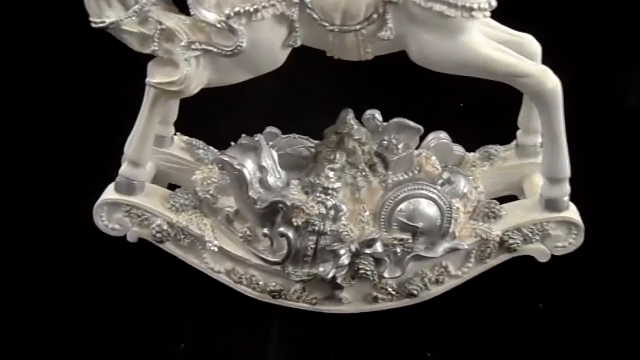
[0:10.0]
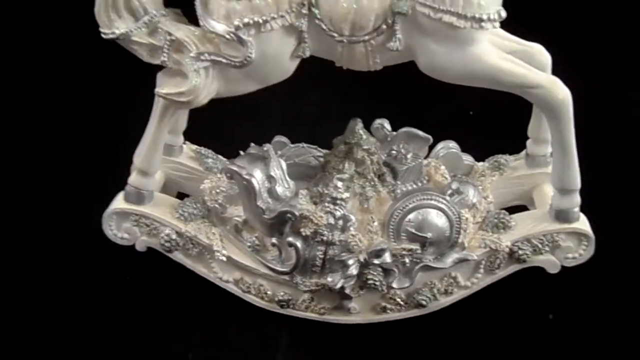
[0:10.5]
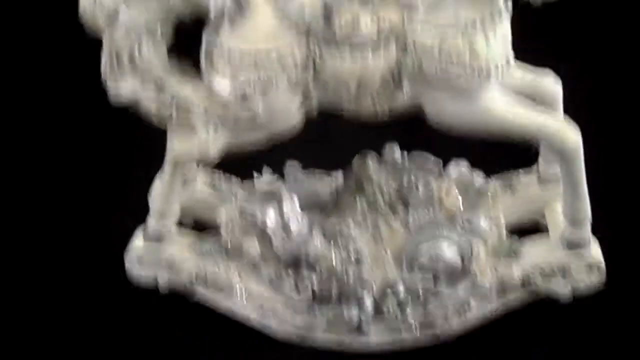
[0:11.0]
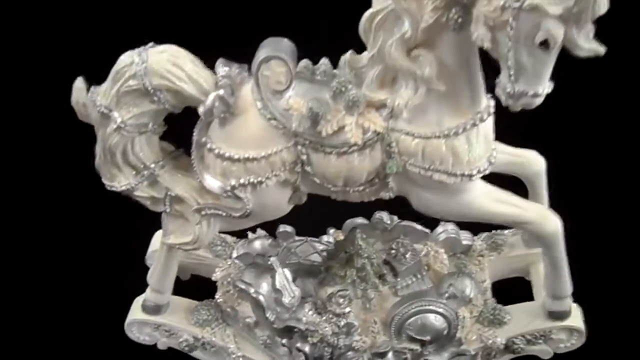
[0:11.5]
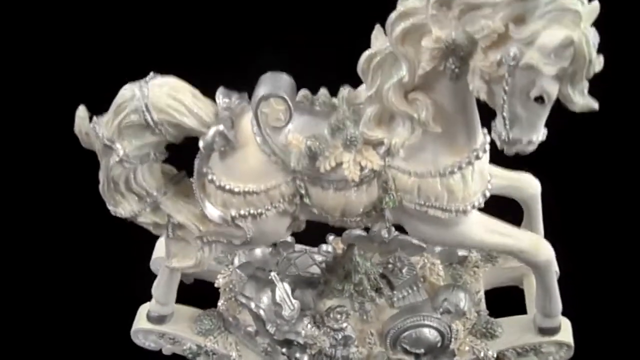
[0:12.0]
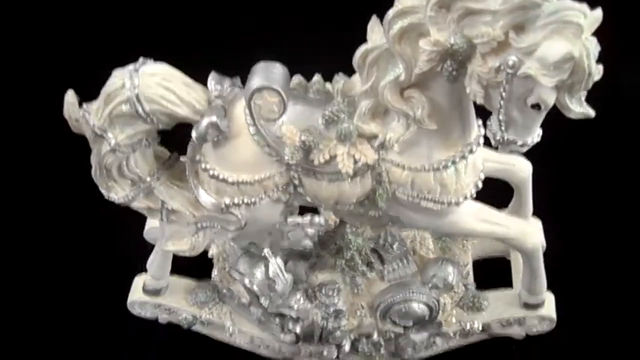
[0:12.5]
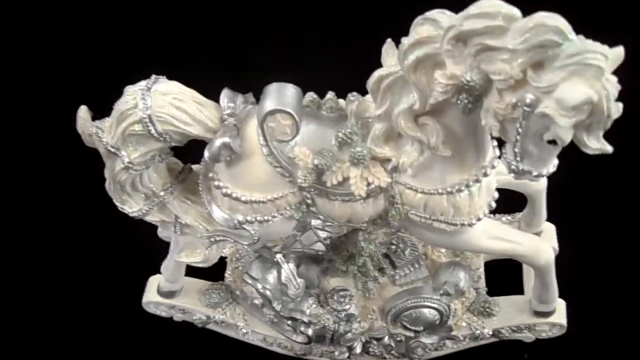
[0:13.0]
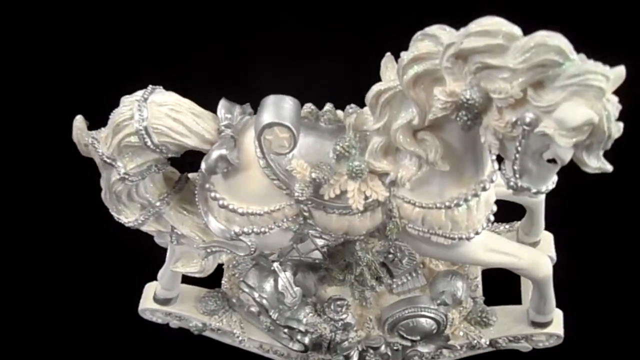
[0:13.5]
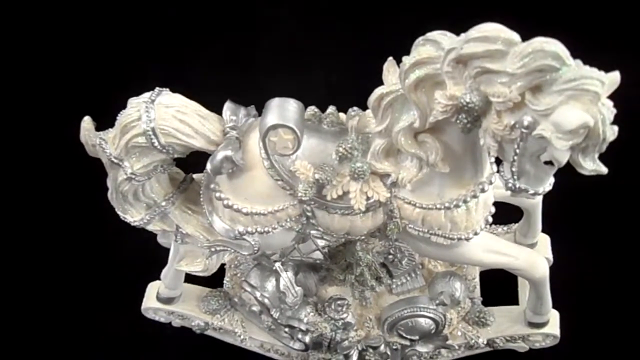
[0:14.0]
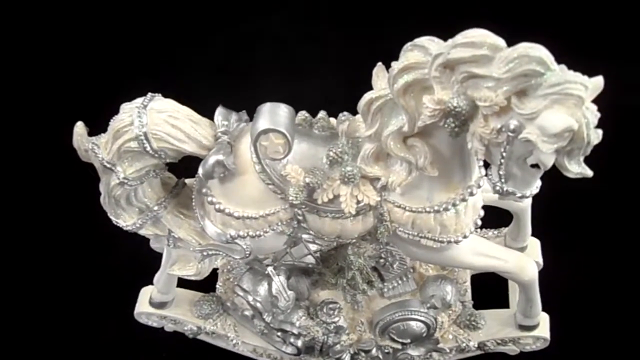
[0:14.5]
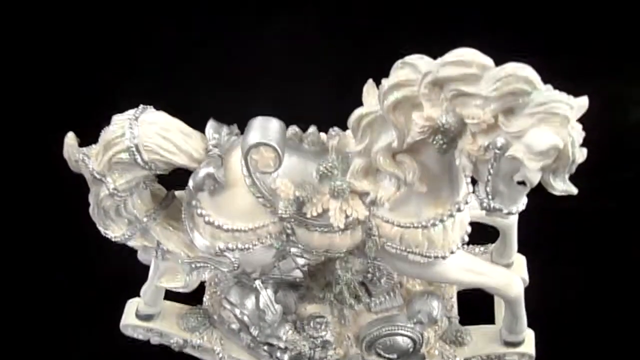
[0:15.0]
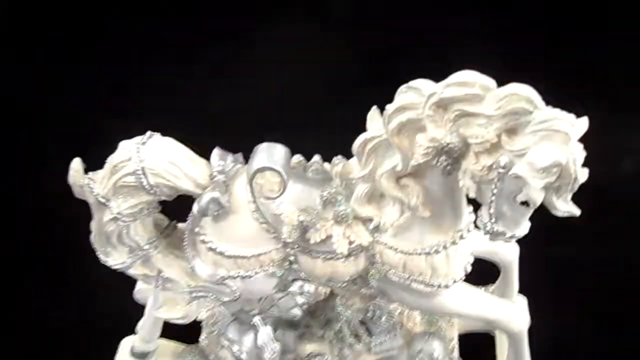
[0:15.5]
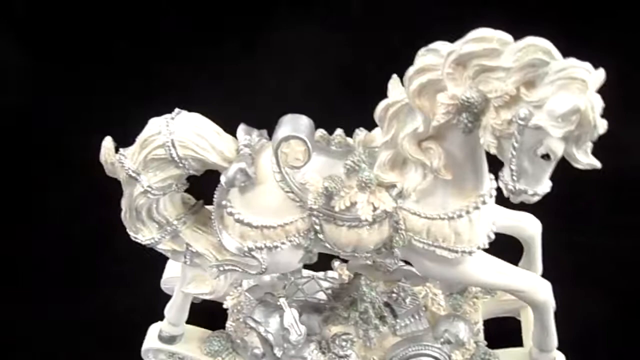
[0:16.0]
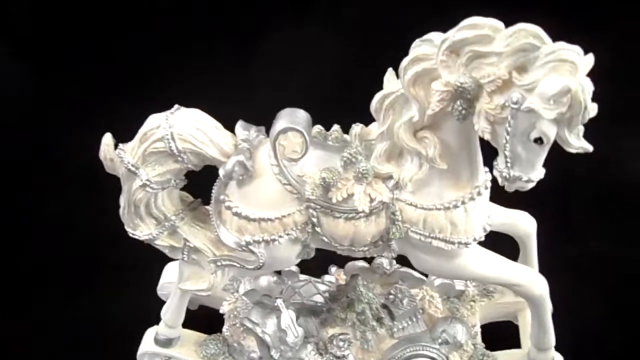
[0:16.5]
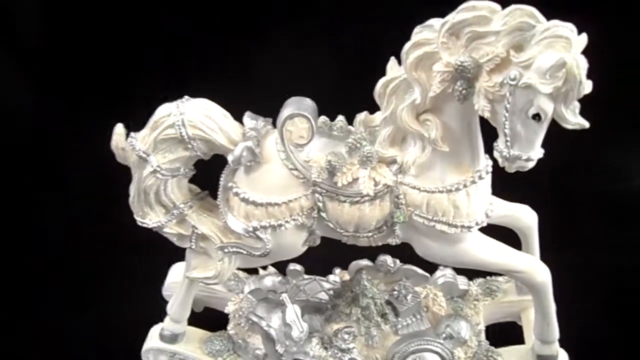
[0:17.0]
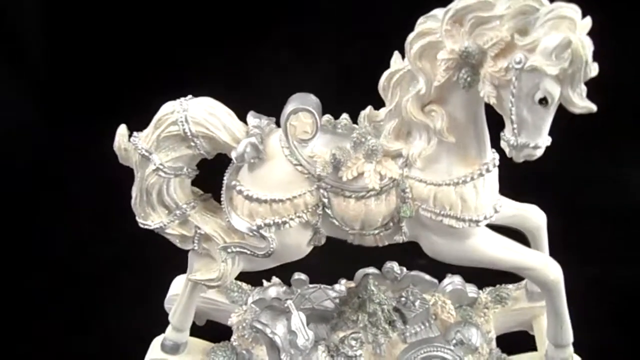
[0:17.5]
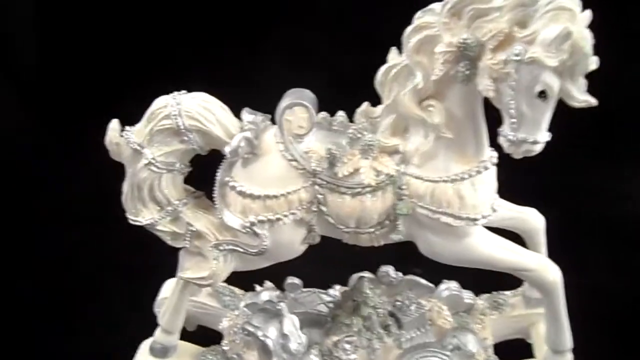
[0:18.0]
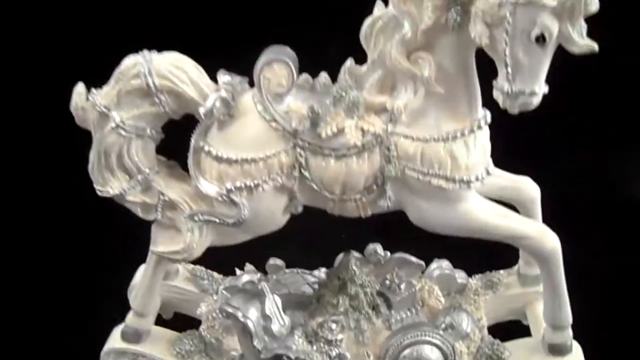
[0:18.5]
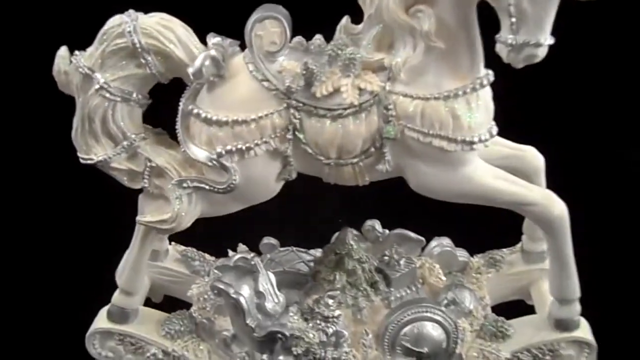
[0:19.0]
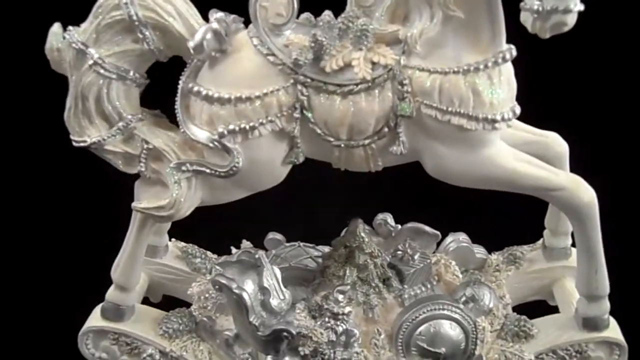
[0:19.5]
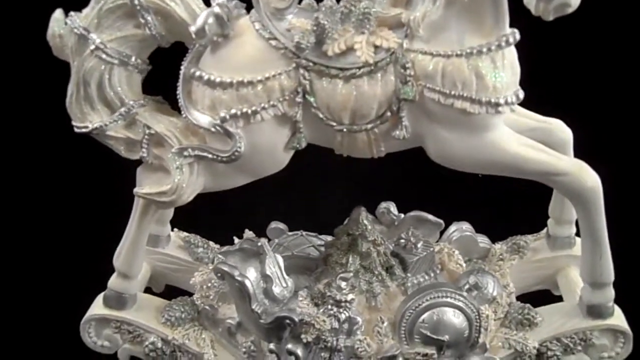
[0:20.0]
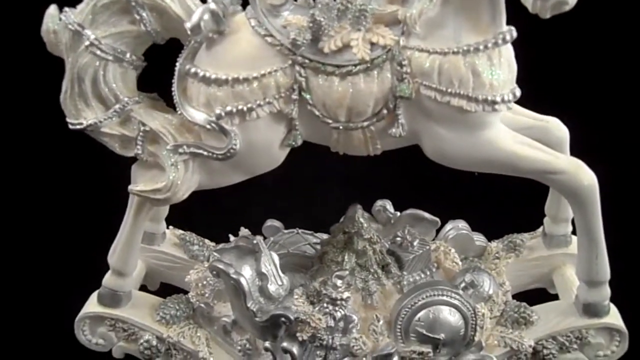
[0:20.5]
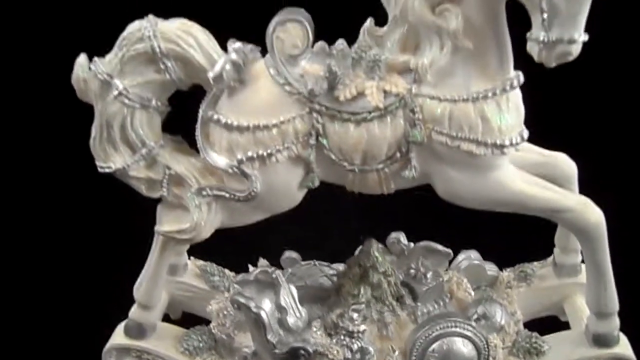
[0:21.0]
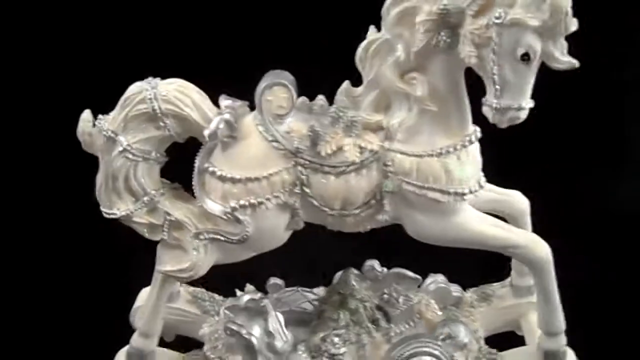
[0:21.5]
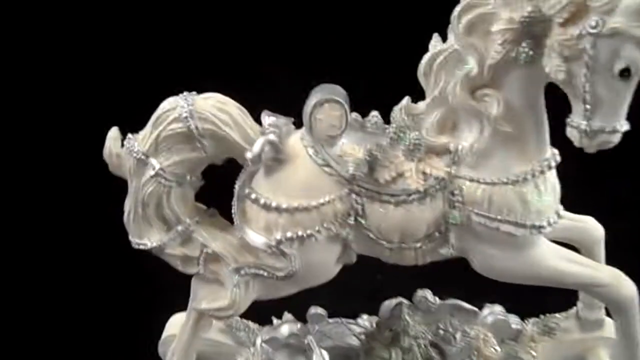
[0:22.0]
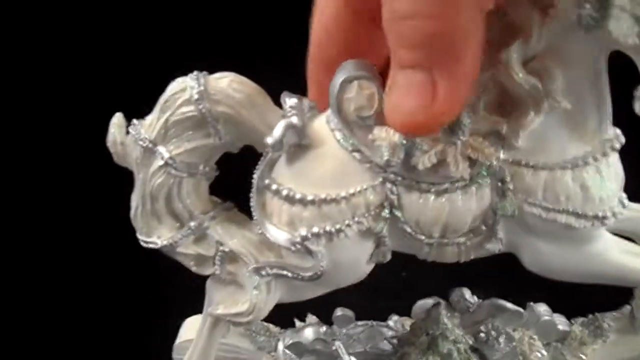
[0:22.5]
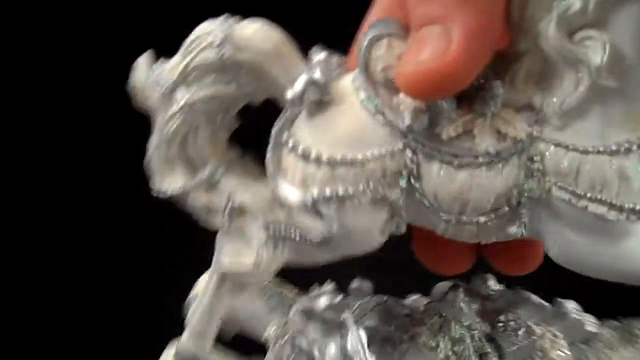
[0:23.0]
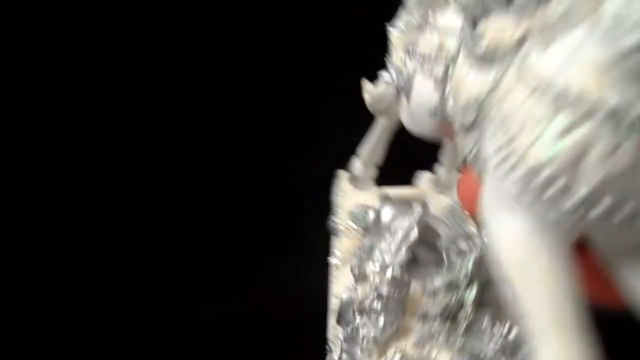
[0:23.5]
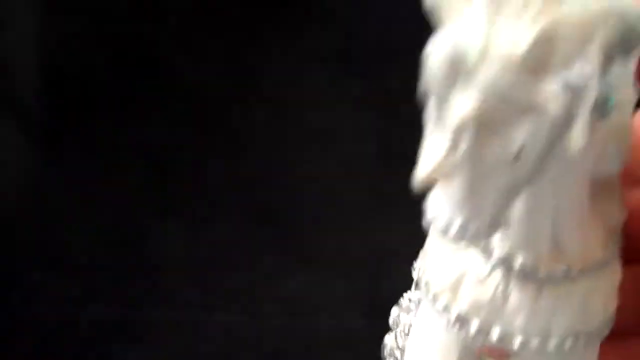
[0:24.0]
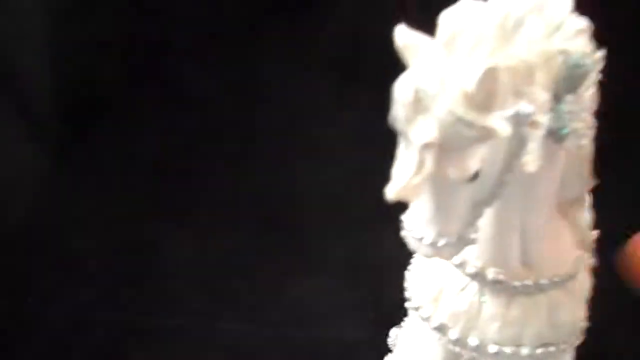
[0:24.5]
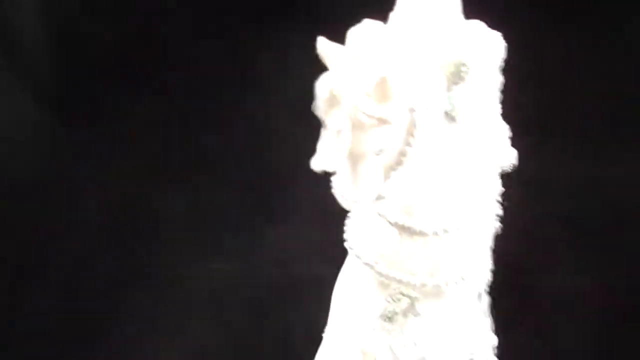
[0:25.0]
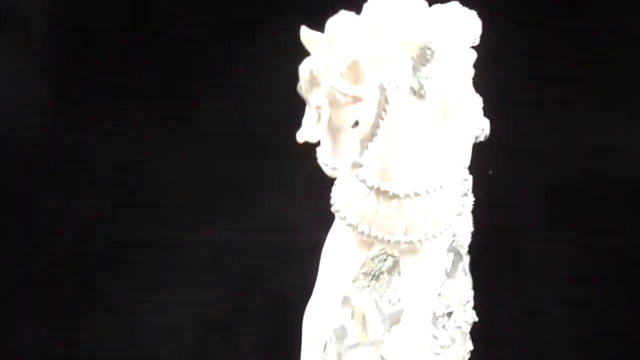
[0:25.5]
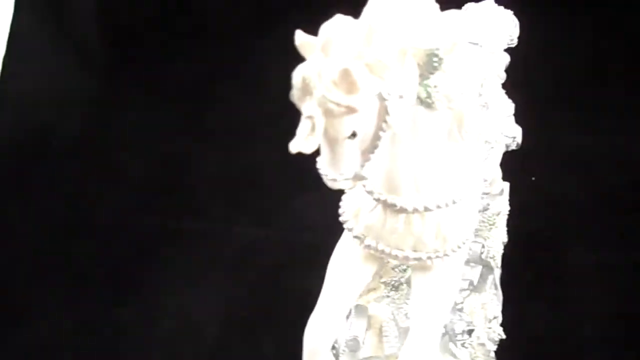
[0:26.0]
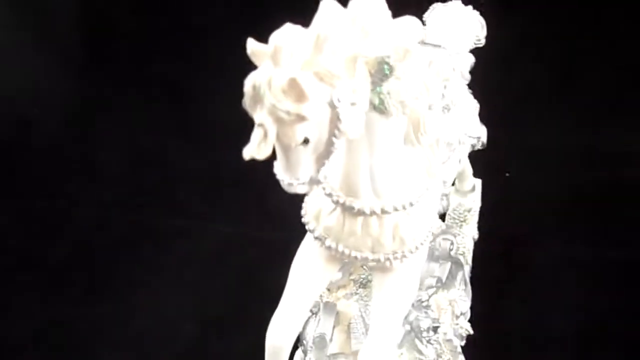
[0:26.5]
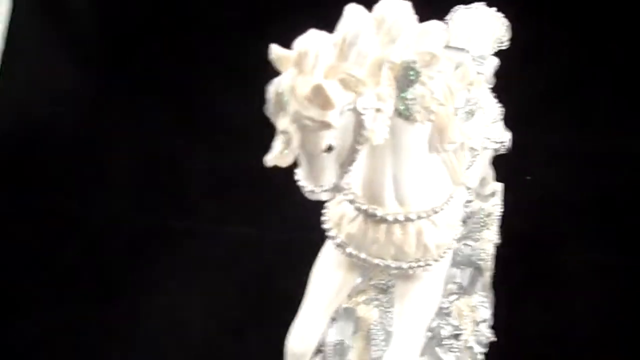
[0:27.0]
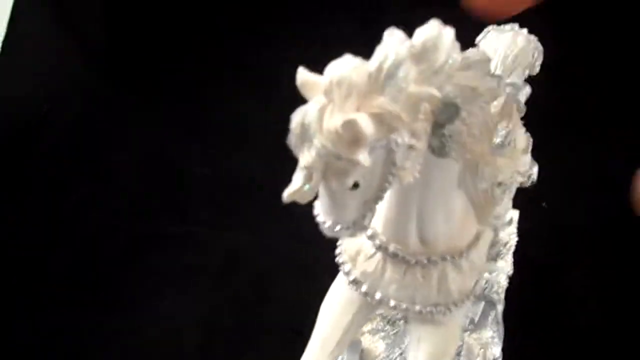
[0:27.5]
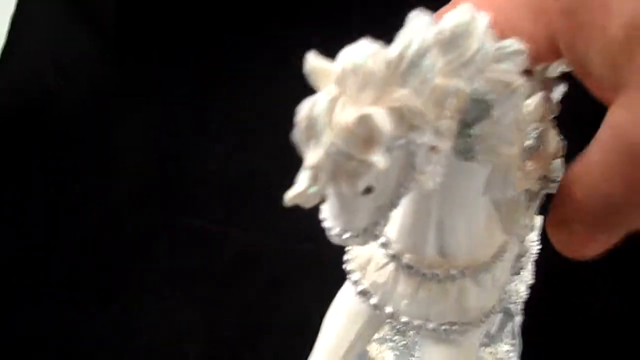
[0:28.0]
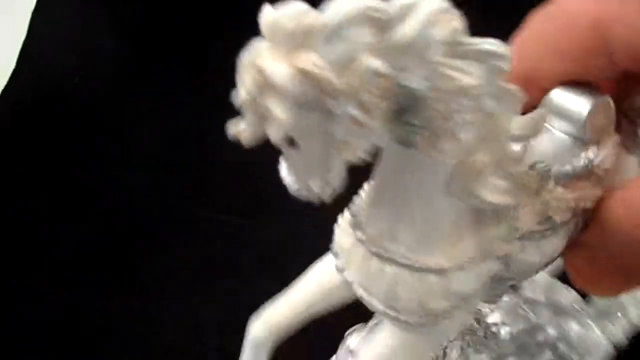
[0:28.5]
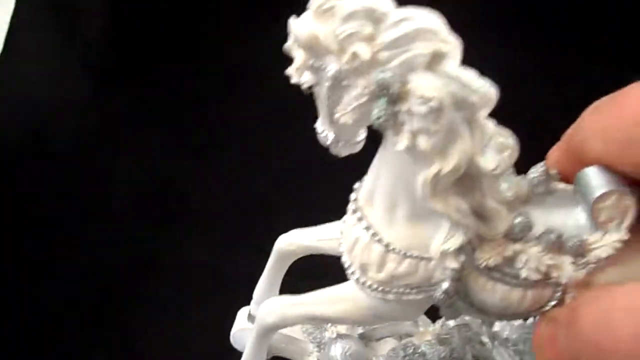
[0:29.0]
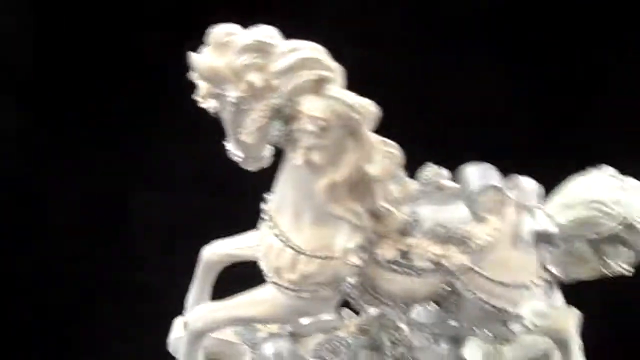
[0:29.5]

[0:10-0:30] The Silver Bells rocking horse is seen from another angle; it looks like it is part of a music box or is a music box. It is completely white, with a lot of detail, especially on the harness around the horse, the reins and the saddle. There are also some silver pieces. The rocker is detailed as well, with vines, decorative leaves and some pearls. The cameraman picks up the item, showing that it is small, probably eight to ten inches high, and fits in the palm of a hand. He turns it around to show the front of the horse, which has its head down in a galloping pose. He then touches the horse again to move it off to the side.